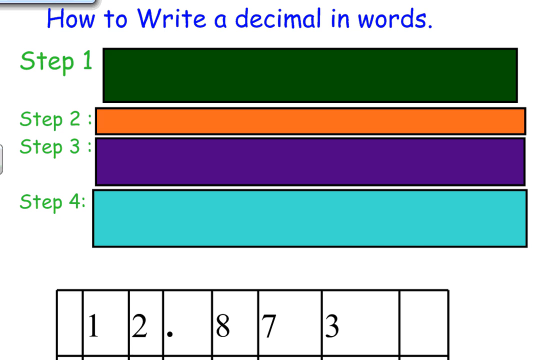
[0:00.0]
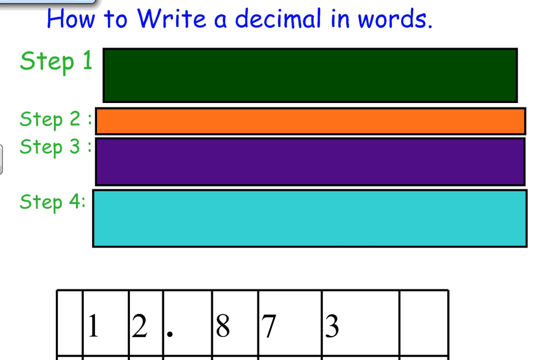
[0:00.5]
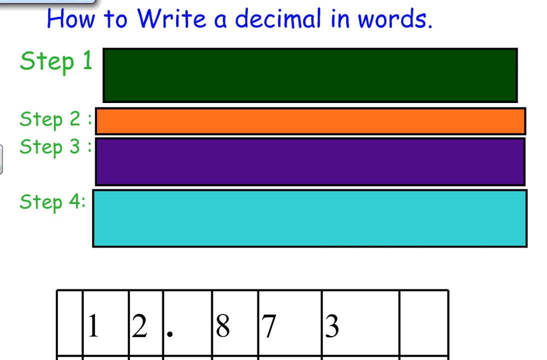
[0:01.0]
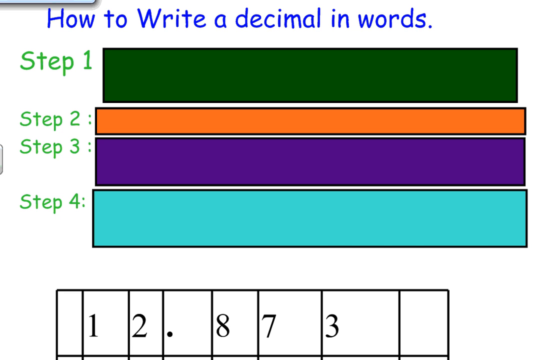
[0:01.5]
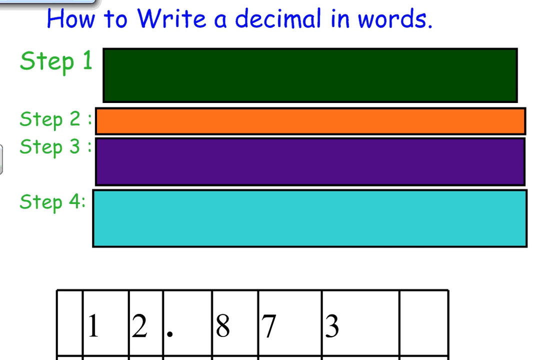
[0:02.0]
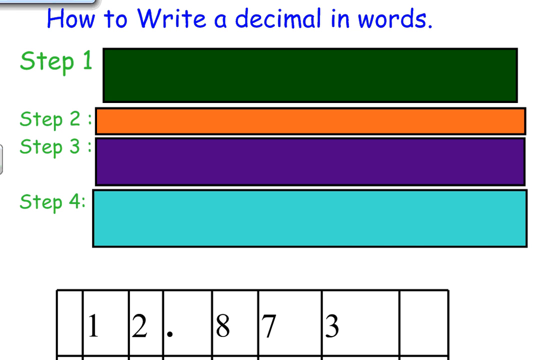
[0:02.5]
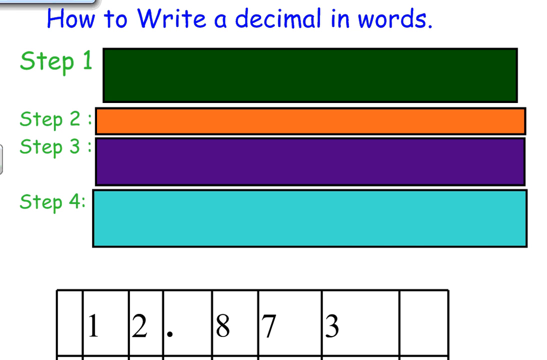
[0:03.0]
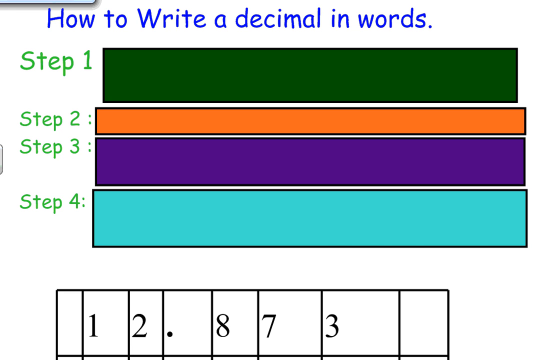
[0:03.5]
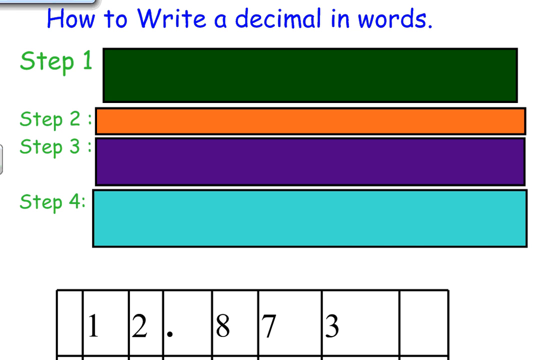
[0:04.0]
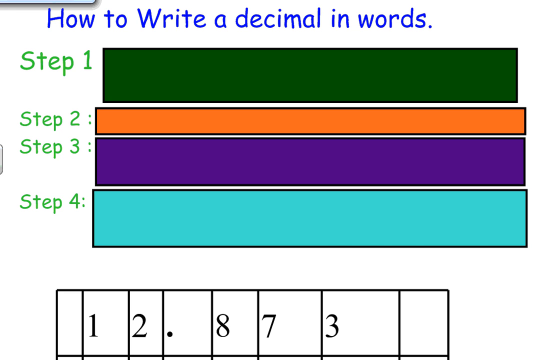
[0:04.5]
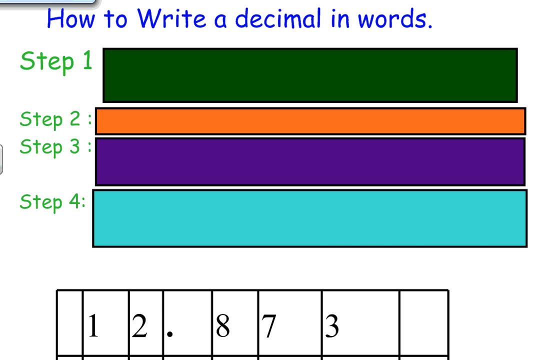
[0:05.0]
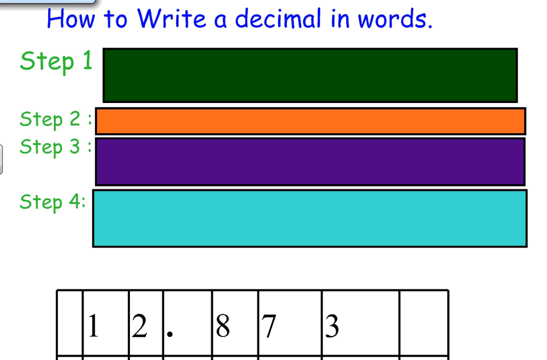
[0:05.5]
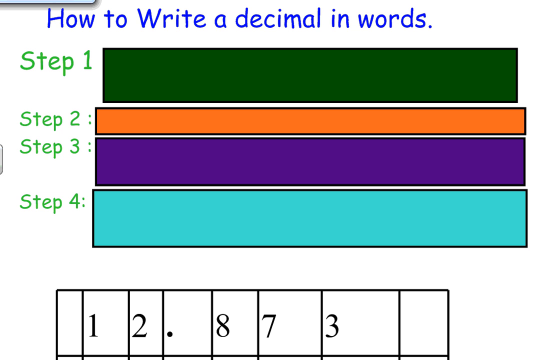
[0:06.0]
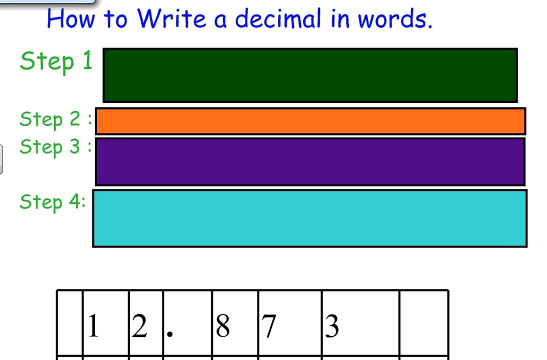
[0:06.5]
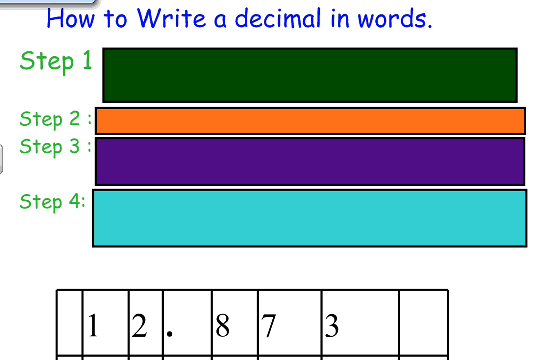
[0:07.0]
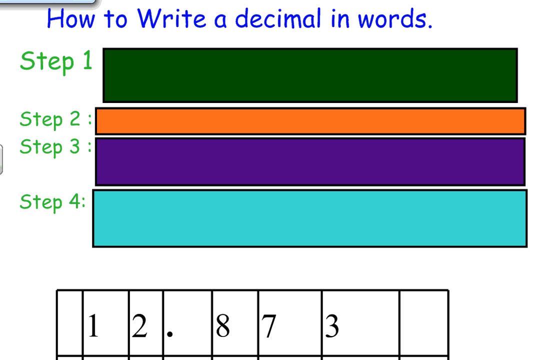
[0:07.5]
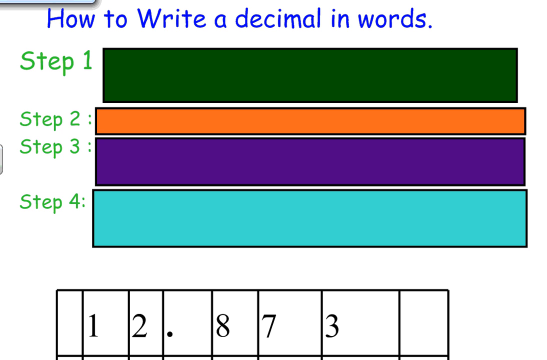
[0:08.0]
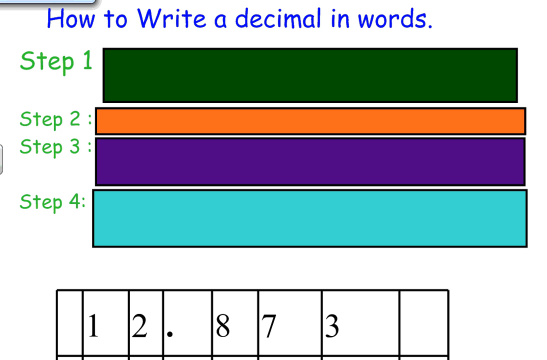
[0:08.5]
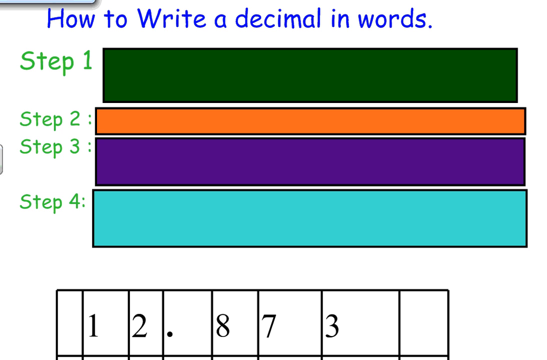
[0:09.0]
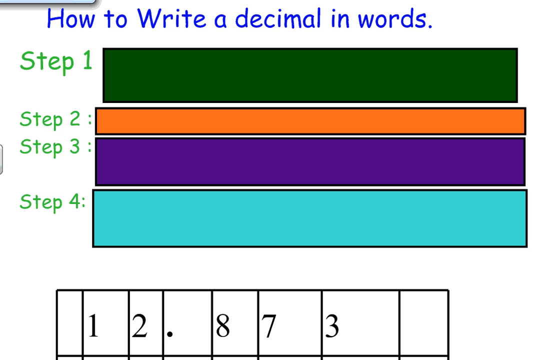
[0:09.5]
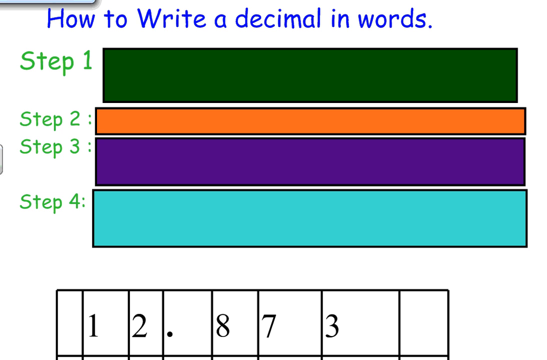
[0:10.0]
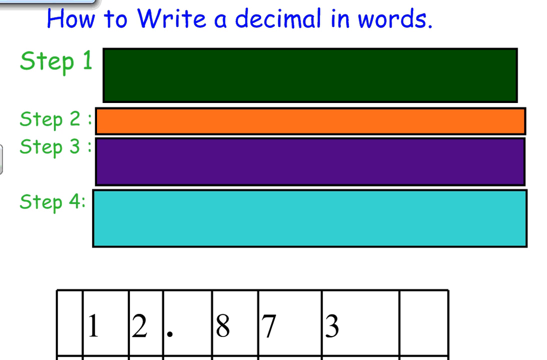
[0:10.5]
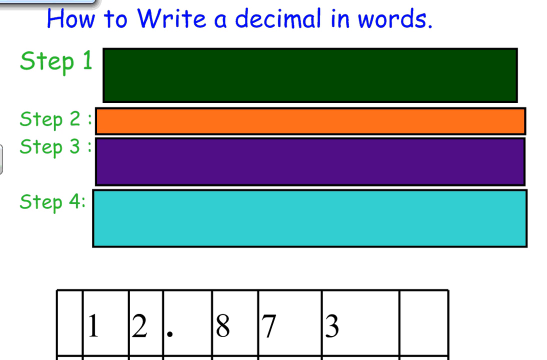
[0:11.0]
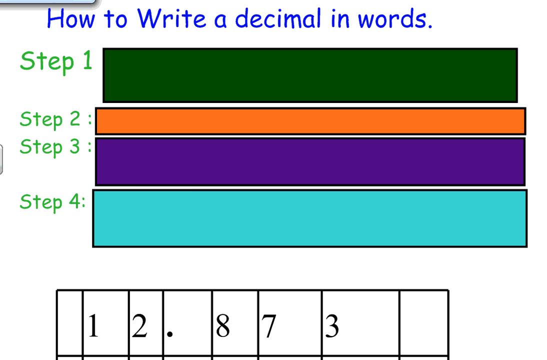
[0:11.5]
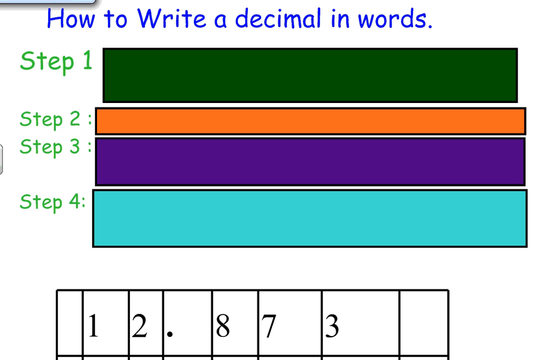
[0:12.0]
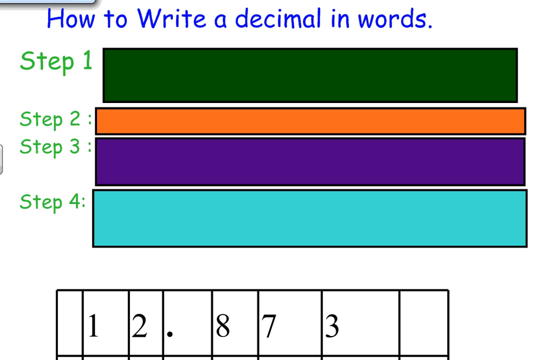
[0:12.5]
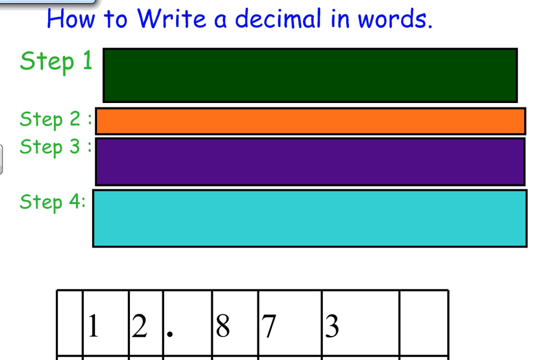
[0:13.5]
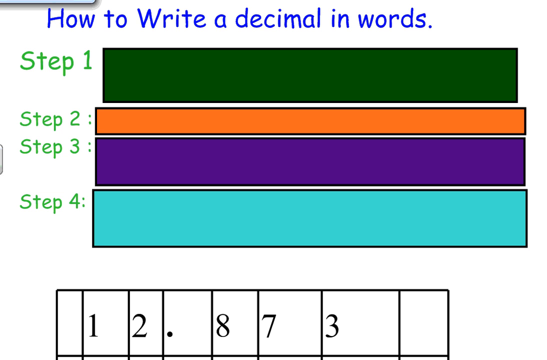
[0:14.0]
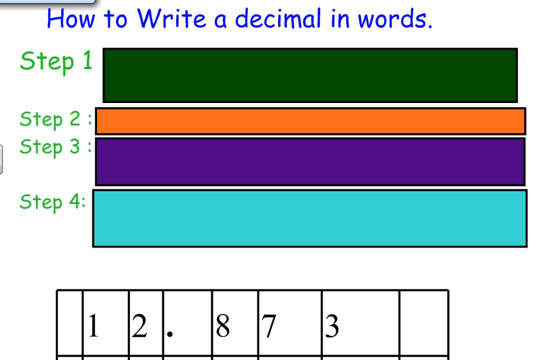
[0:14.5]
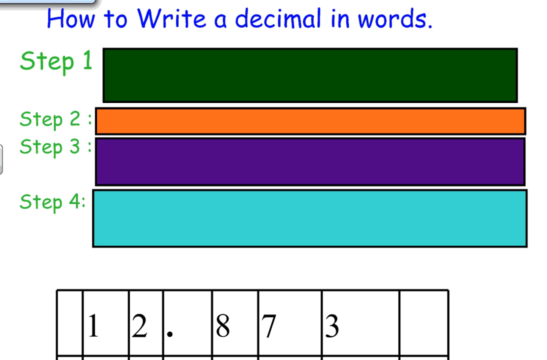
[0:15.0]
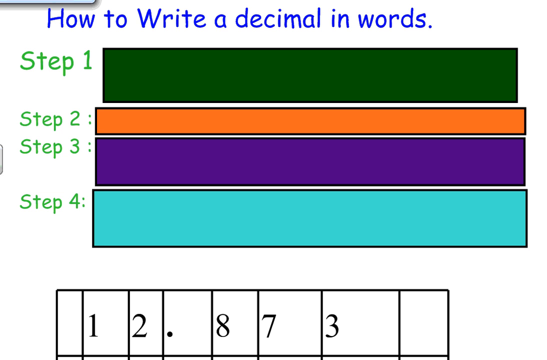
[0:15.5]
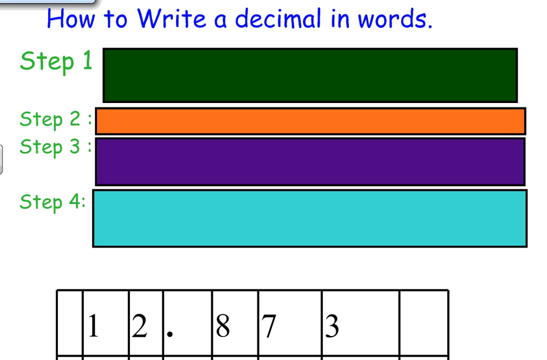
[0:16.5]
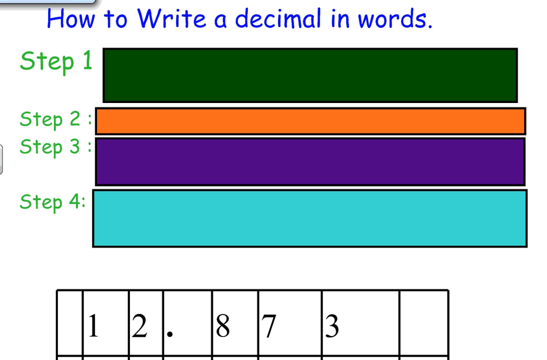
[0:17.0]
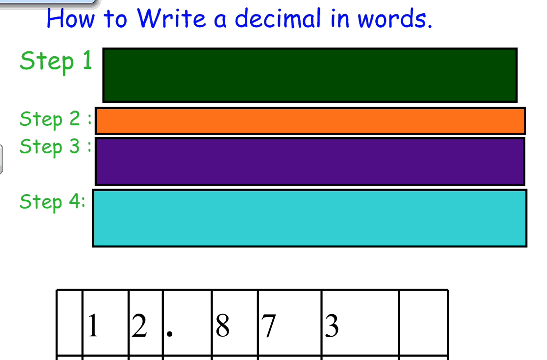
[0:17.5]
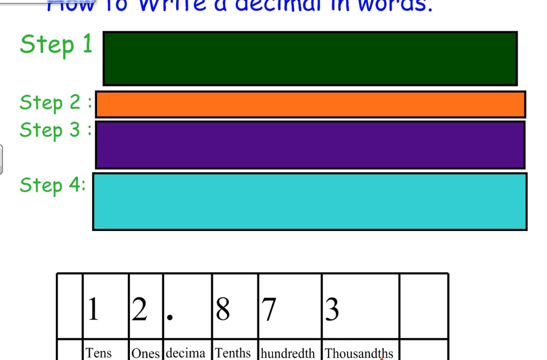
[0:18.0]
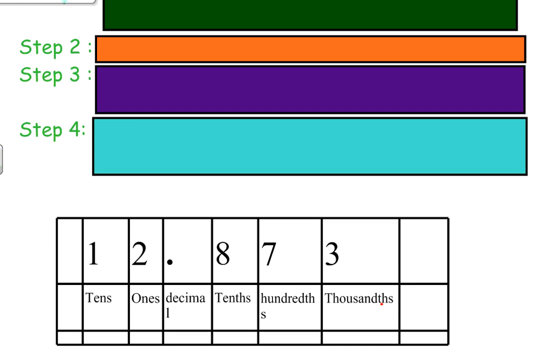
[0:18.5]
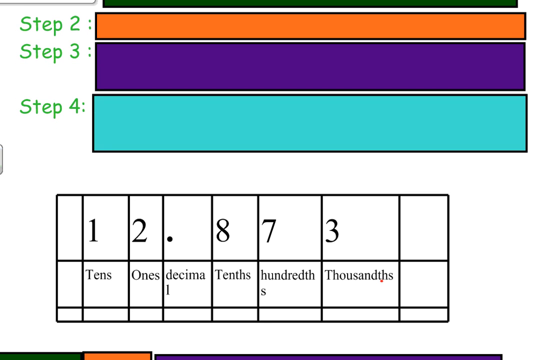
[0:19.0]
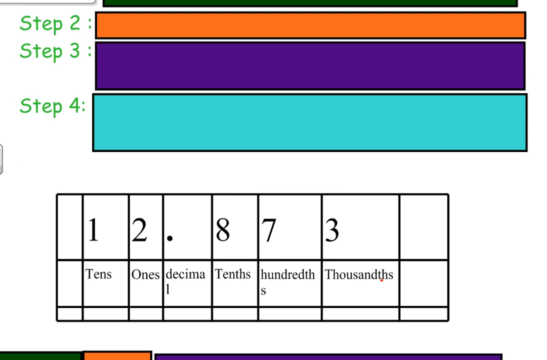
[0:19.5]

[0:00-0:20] The video presents steps for writing decimals in words: Step 1, Step 2, Step 3 and Step 4. Step 1 is shown in green, Step 2 in orange, Step 3 in purple and Step 4 in blue. A graph appears that represents the decimals in words, or how each step is done.